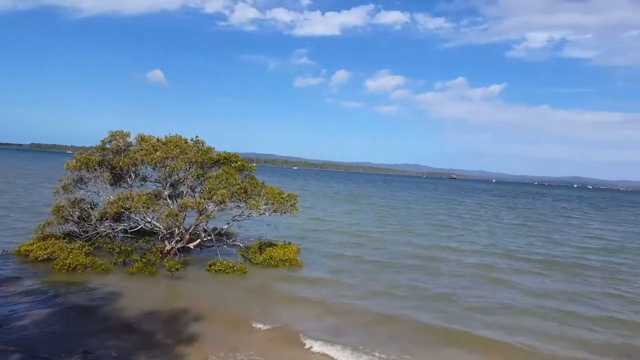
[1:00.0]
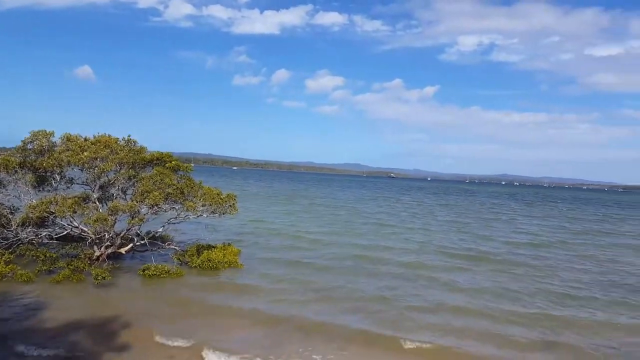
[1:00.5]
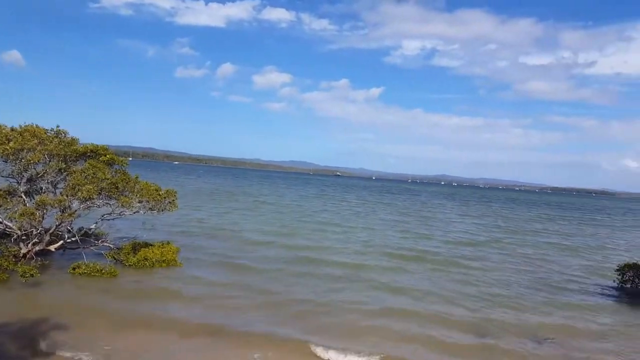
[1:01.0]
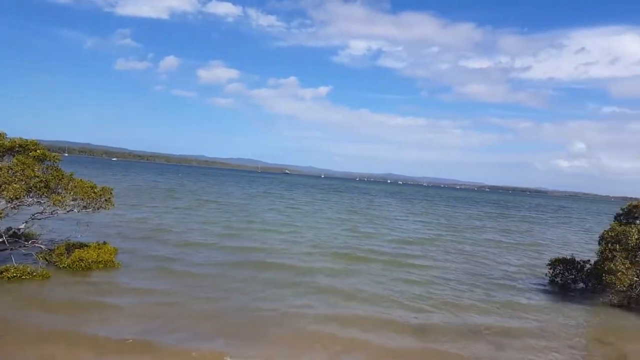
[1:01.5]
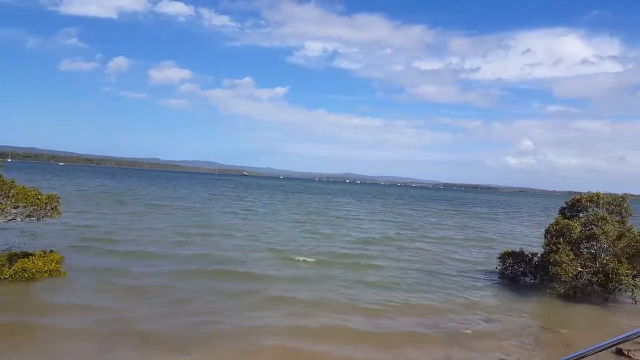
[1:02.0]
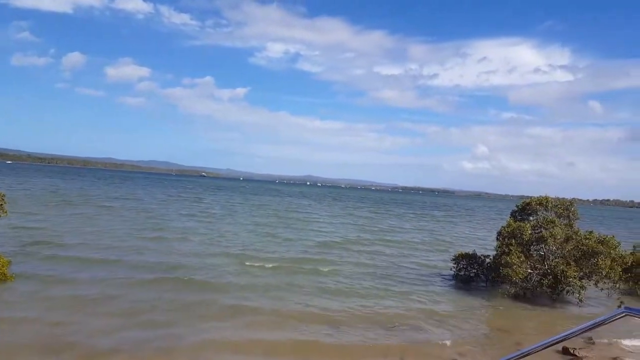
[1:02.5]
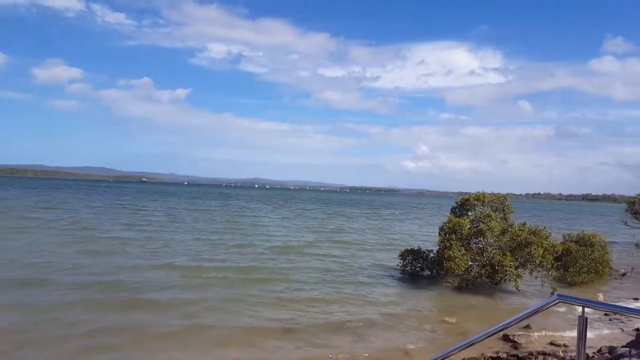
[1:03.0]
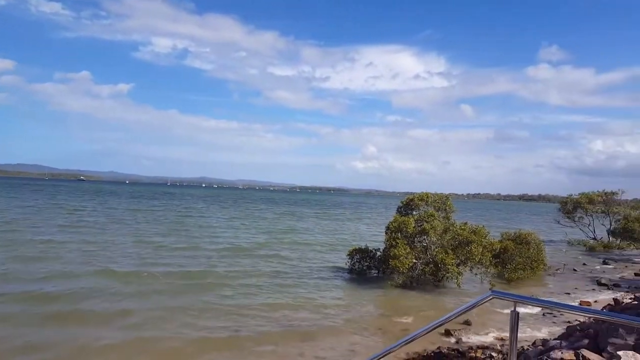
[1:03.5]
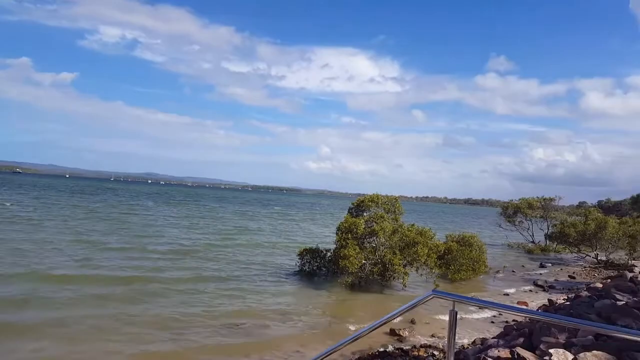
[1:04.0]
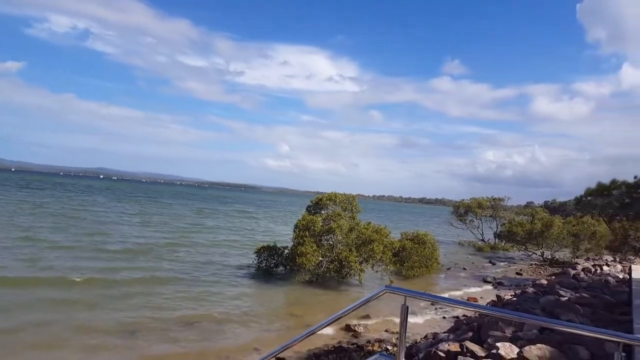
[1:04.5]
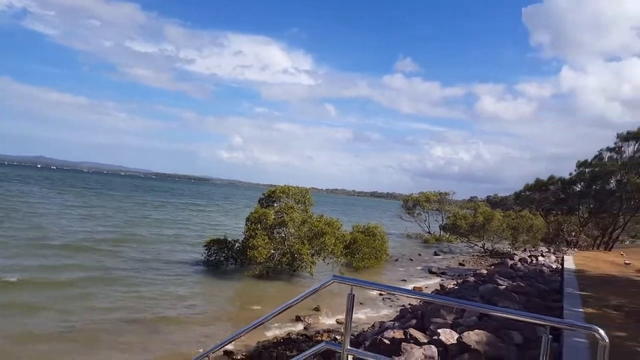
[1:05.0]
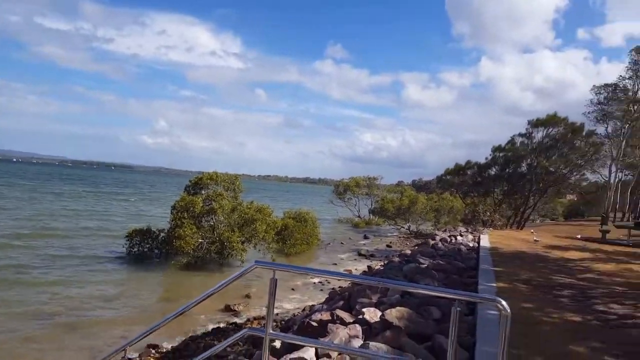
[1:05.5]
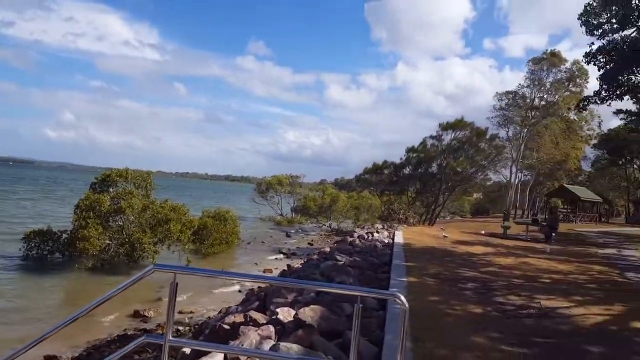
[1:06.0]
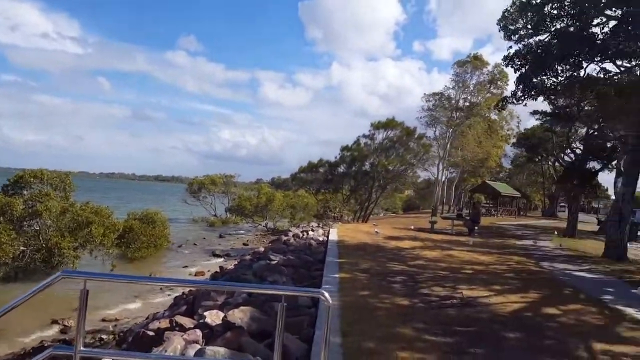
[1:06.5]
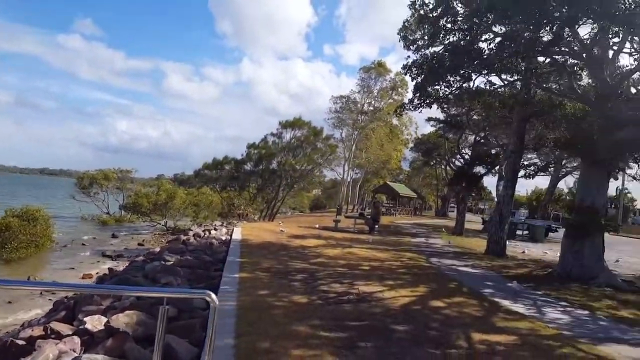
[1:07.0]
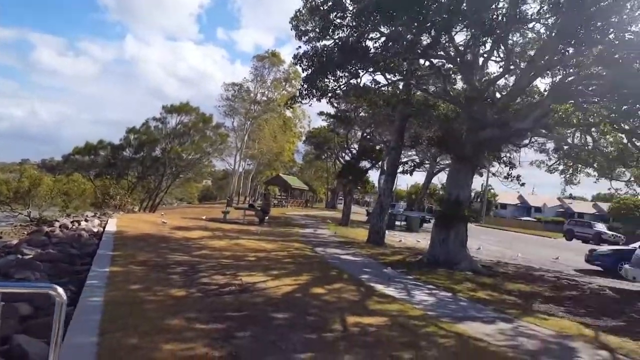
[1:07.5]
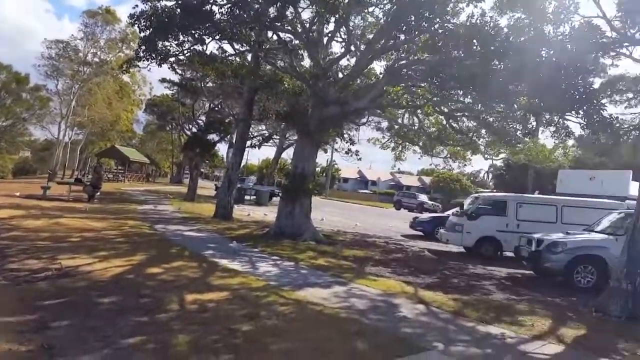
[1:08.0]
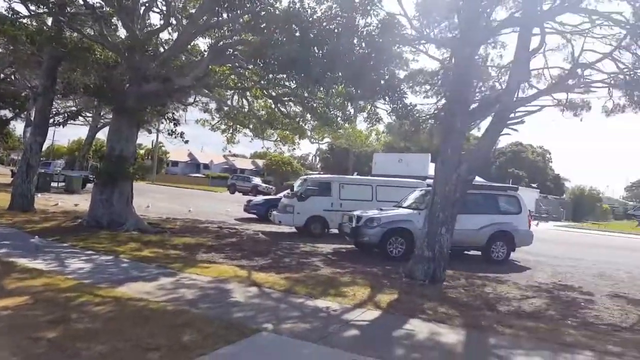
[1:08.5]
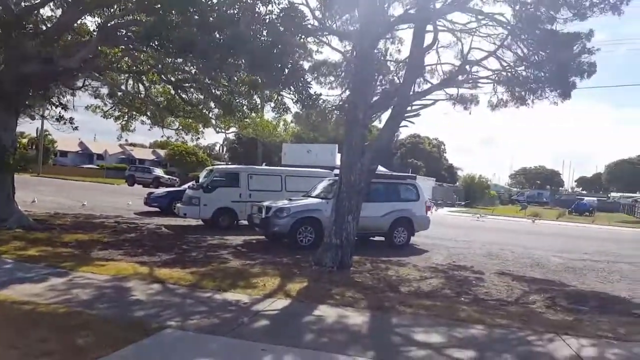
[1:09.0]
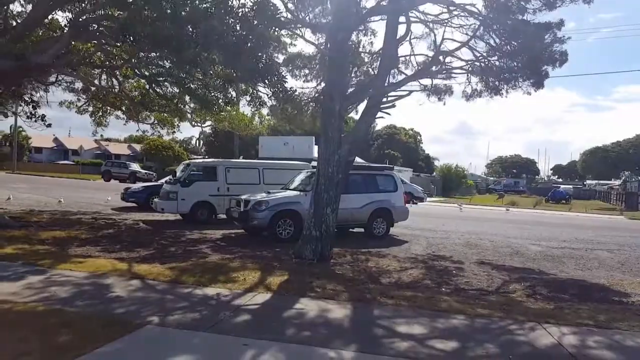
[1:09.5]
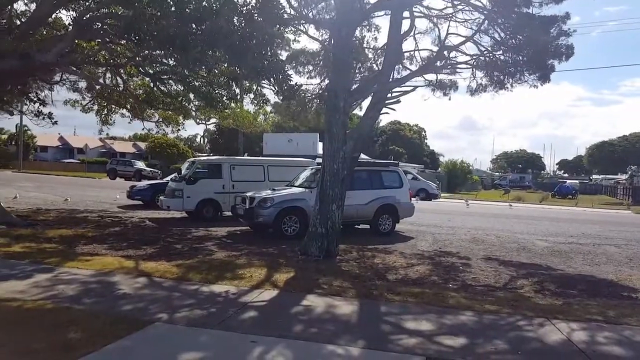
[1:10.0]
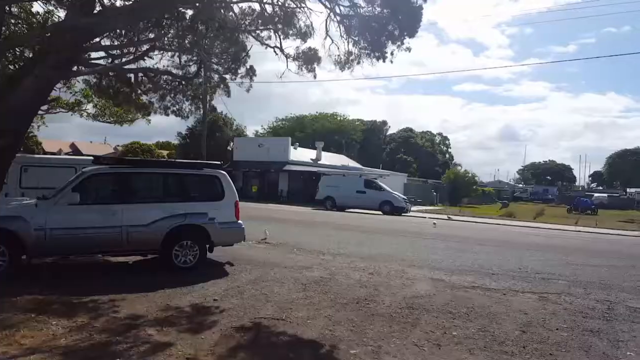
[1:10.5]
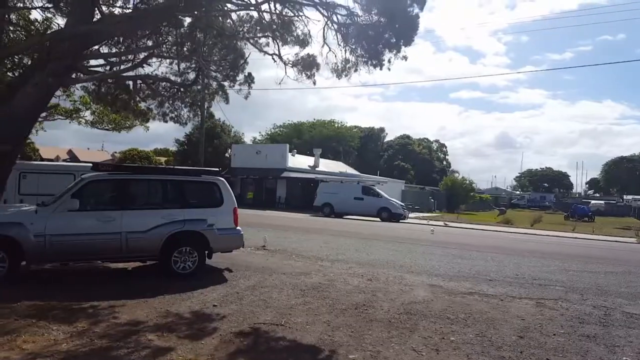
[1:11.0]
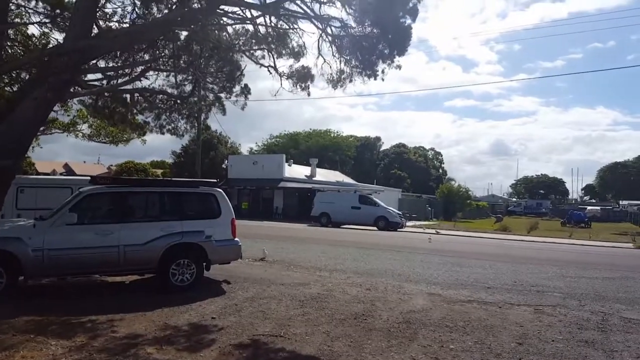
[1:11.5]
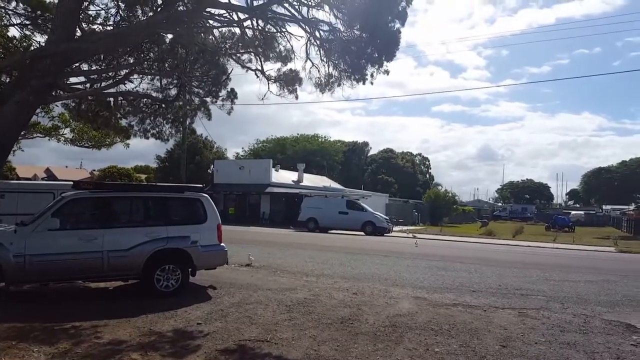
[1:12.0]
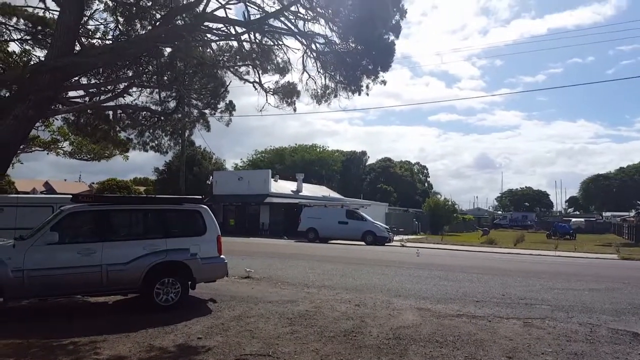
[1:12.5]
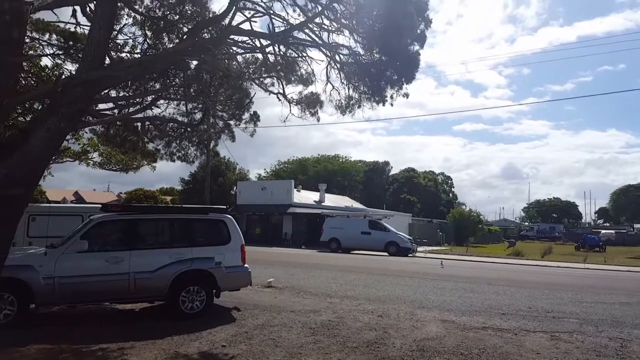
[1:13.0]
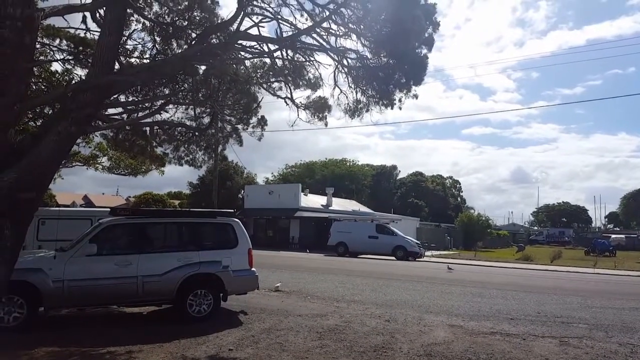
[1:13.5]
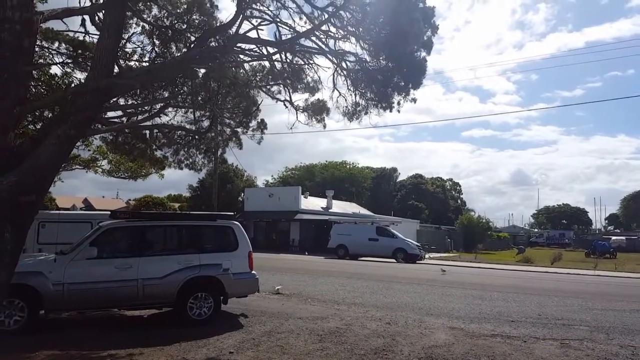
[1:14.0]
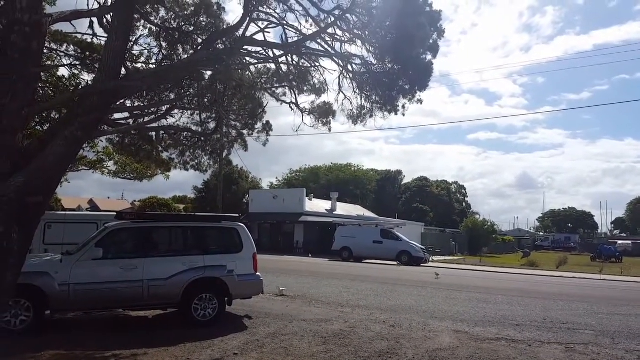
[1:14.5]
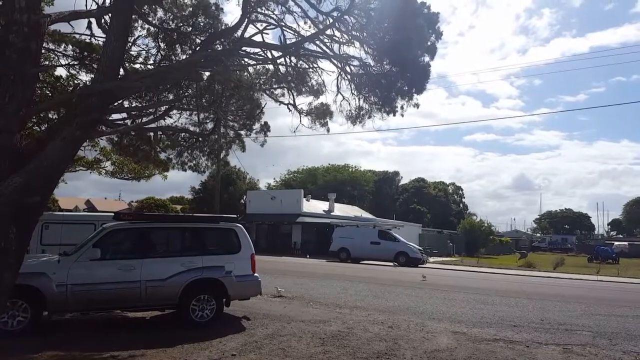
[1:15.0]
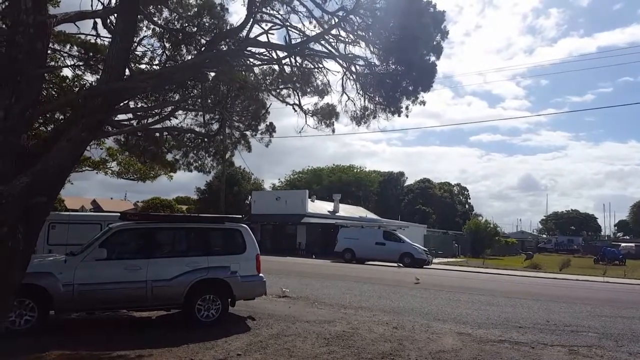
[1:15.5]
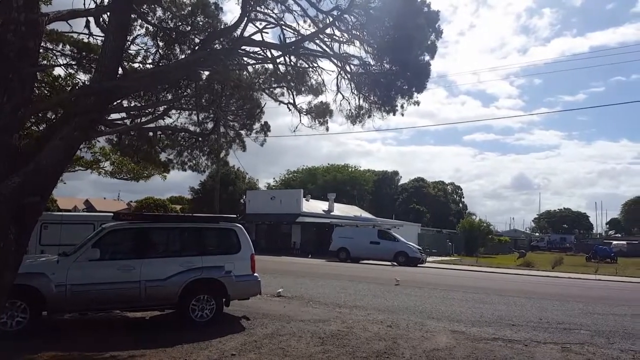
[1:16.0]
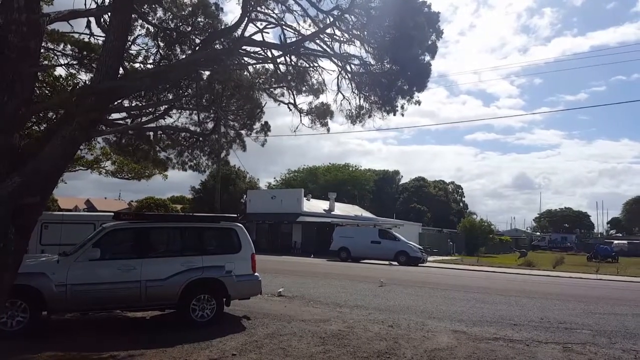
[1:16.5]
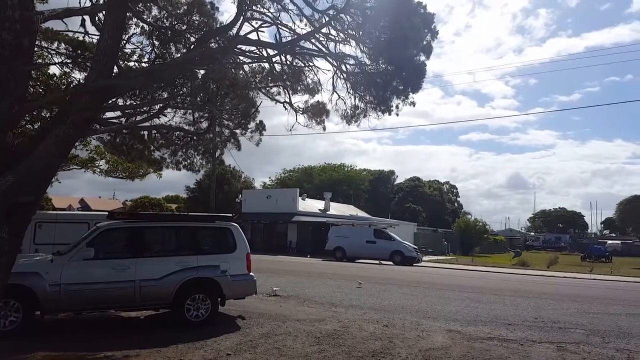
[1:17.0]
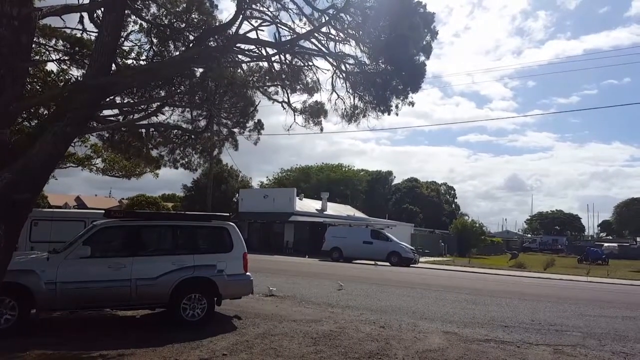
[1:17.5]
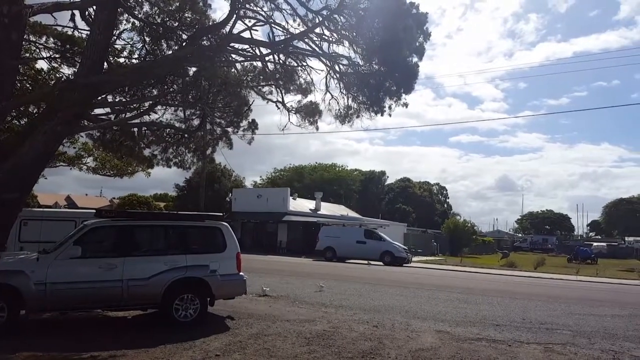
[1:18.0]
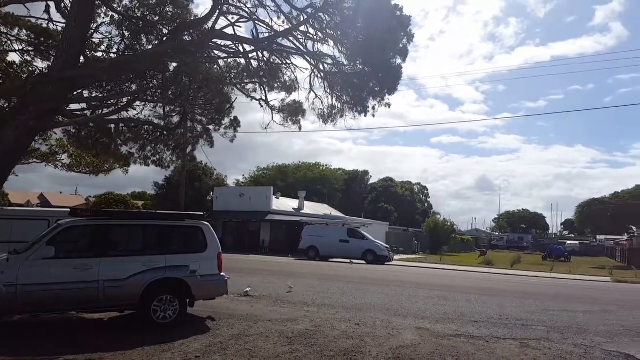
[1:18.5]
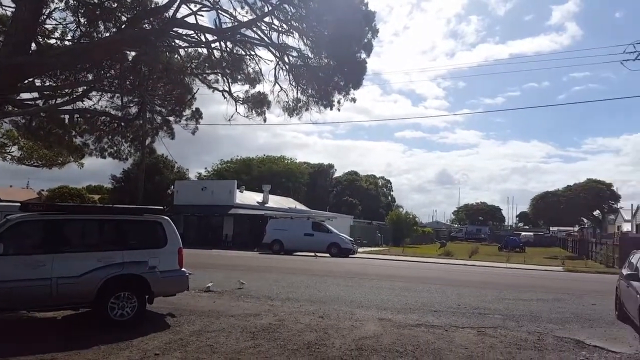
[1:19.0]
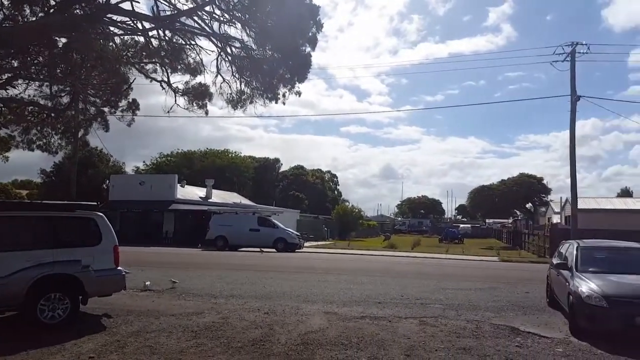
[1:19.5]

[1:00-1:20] The camera looks across a lake, moving from left to right. Three fallen or submerged trees are in the lake along the shore, and rocks line the shore. The water is a little murky rather than clear, with very soft, gentle splashes against the rocks, and a couple of trees stand along the pathway next to the lake. The view moves to the right along the shore and then turns behind, showing a parking lot with several cars parked, including an SUV, a white van, and a blue sedan, as well as houses, some seagulls, and other cars parked around the lot. The view then focuses on what looks like a coffee shop next to the parking lot: a white building with a white van in front of it and a green lot to its right. The sky is blue with white clouds across it, and it looks like a fair day.